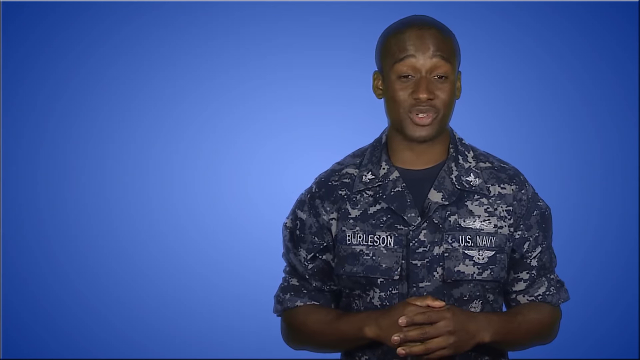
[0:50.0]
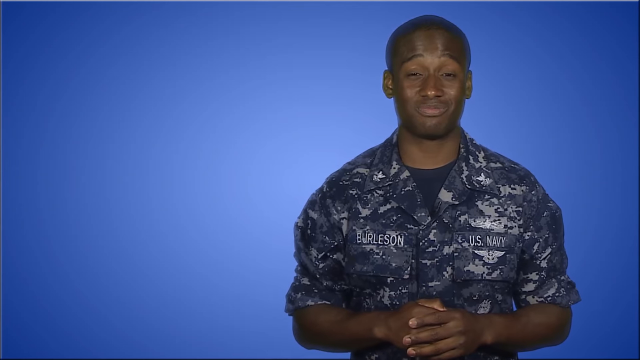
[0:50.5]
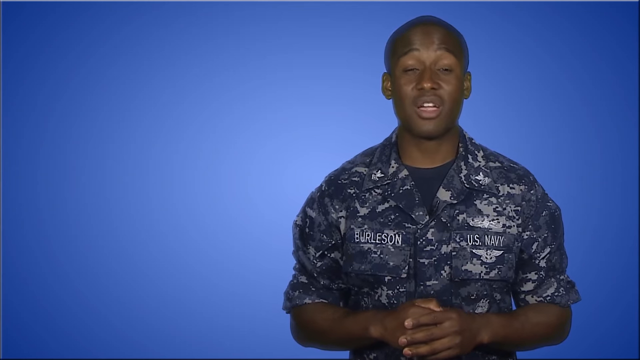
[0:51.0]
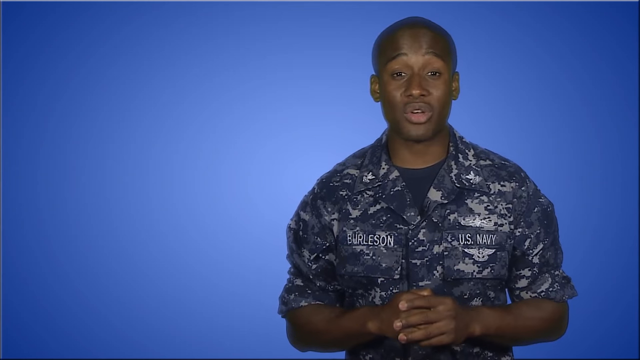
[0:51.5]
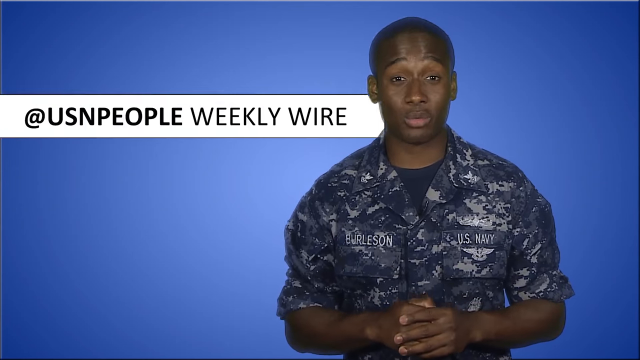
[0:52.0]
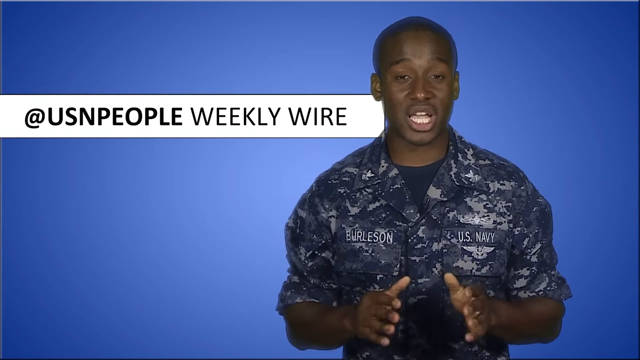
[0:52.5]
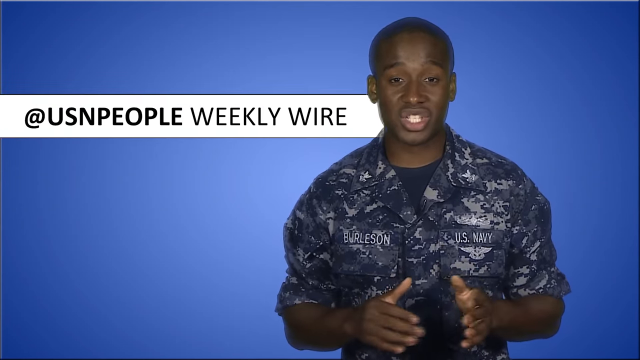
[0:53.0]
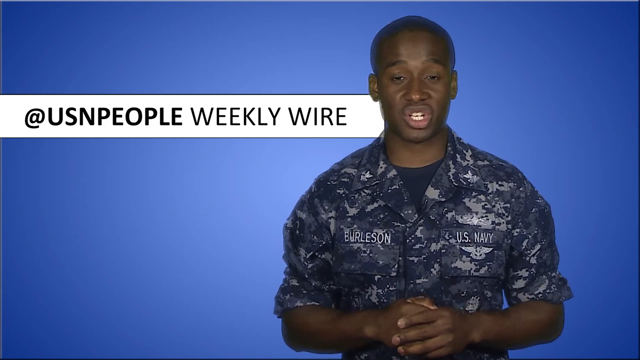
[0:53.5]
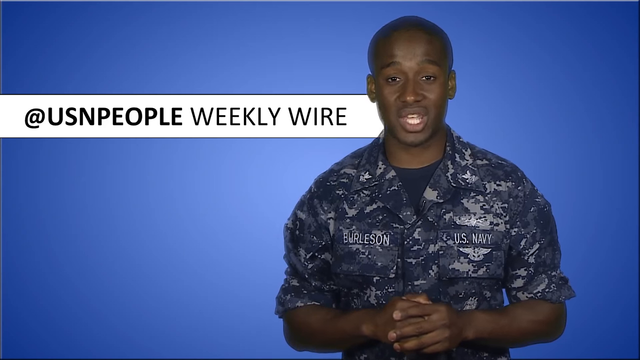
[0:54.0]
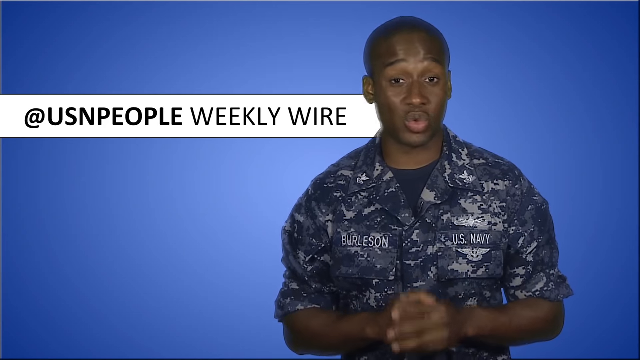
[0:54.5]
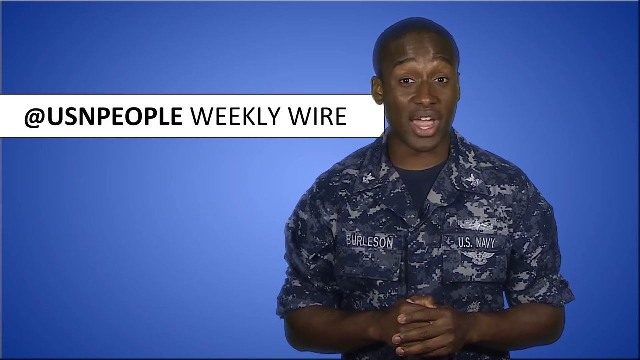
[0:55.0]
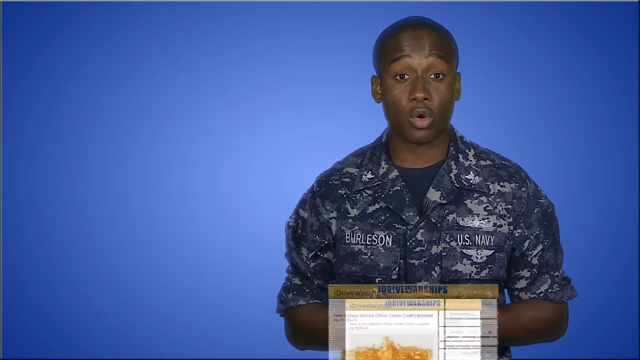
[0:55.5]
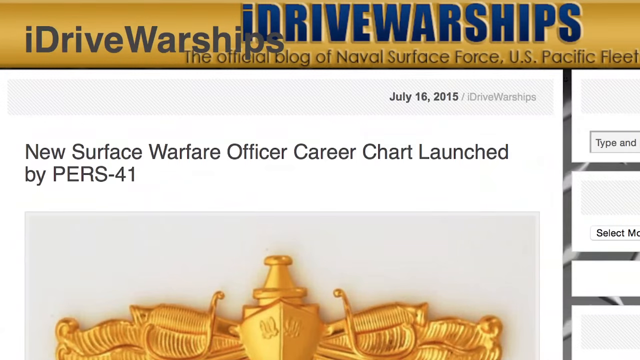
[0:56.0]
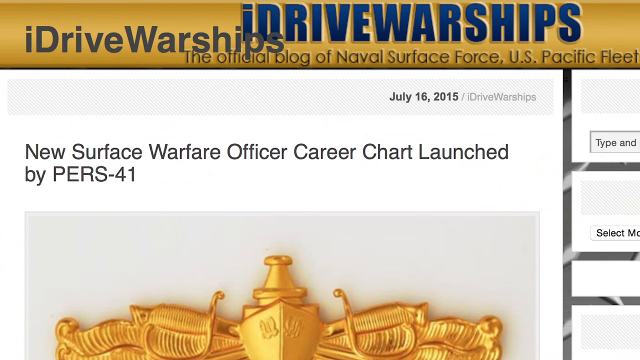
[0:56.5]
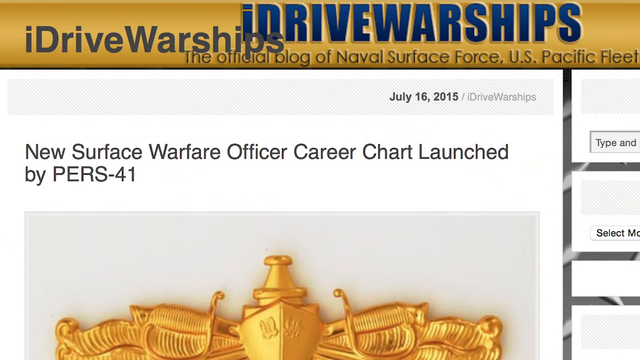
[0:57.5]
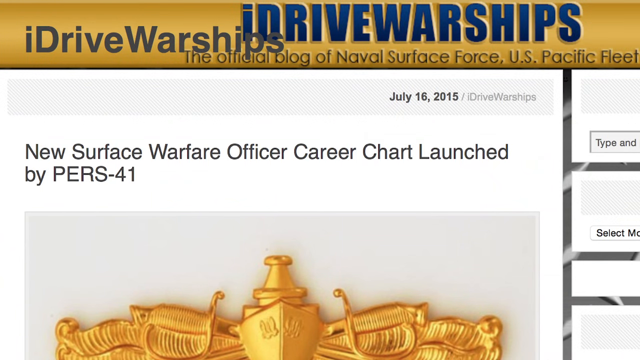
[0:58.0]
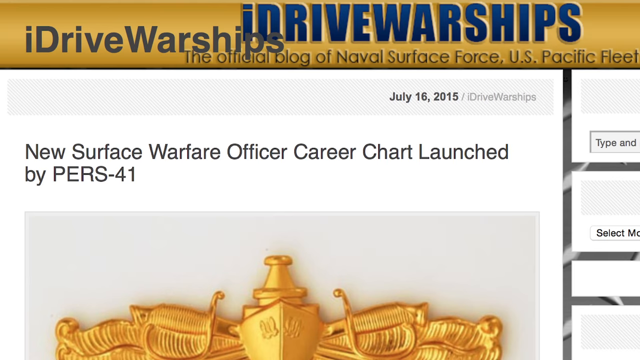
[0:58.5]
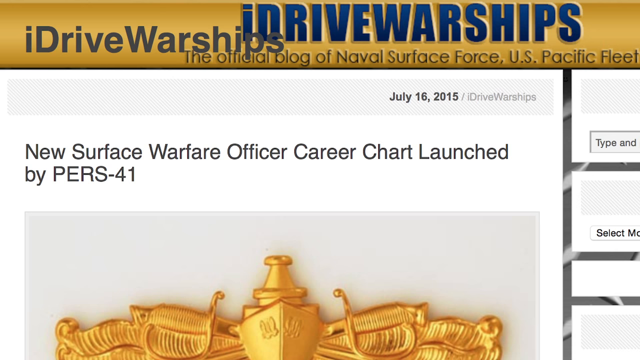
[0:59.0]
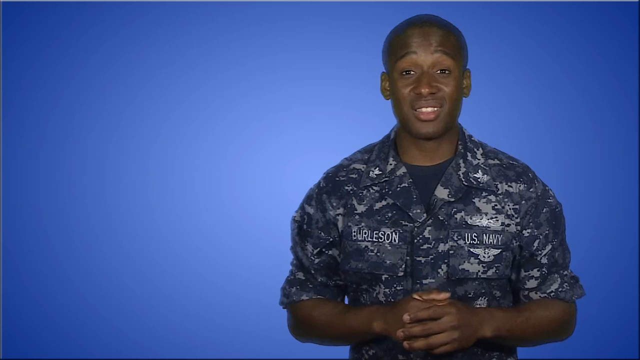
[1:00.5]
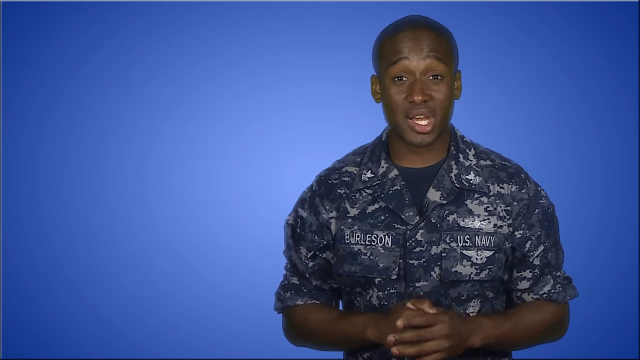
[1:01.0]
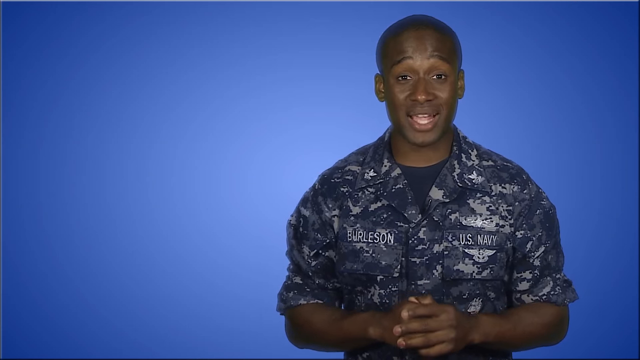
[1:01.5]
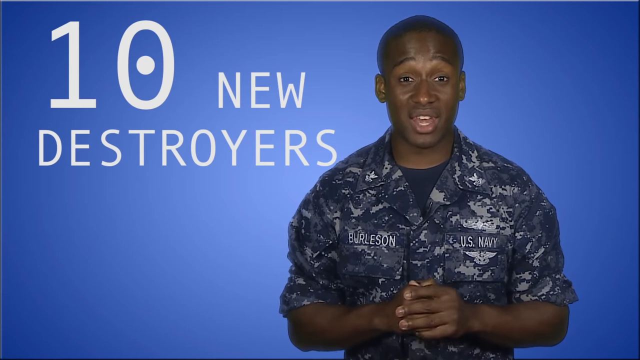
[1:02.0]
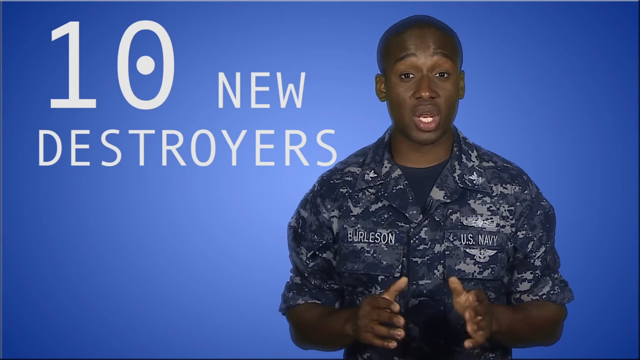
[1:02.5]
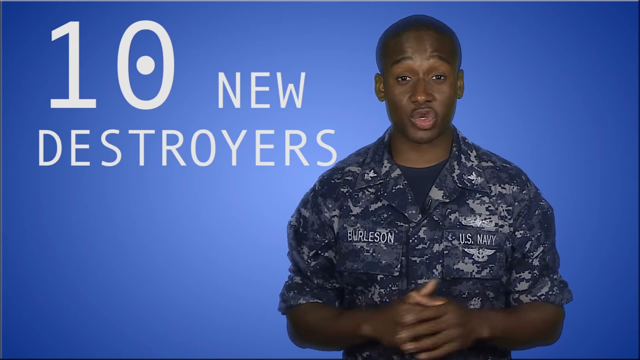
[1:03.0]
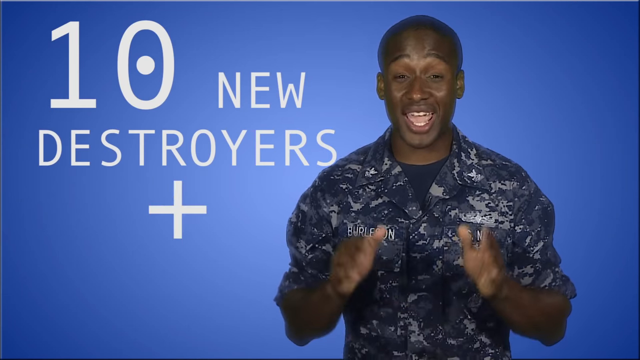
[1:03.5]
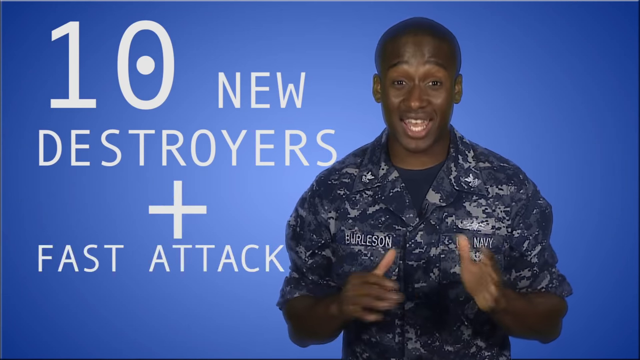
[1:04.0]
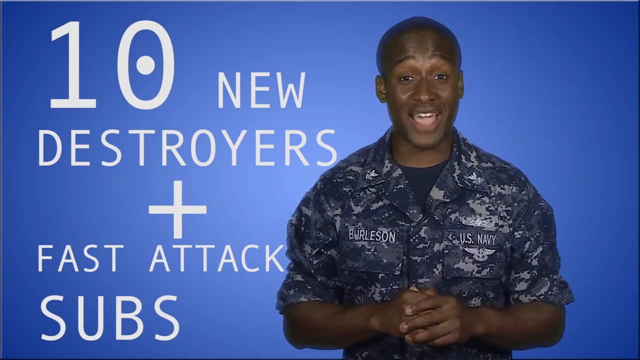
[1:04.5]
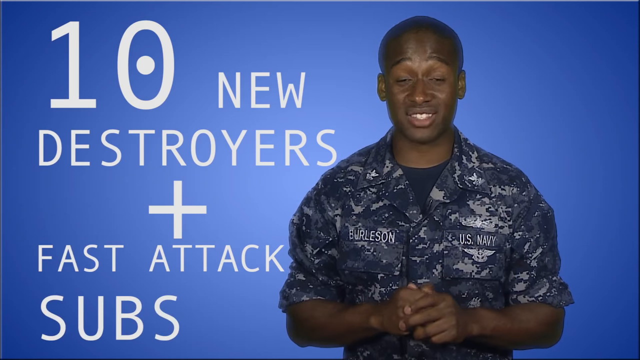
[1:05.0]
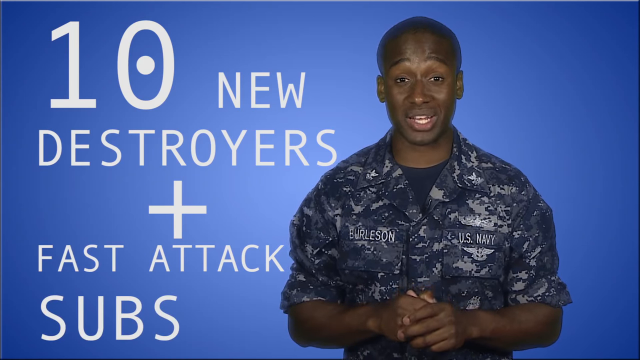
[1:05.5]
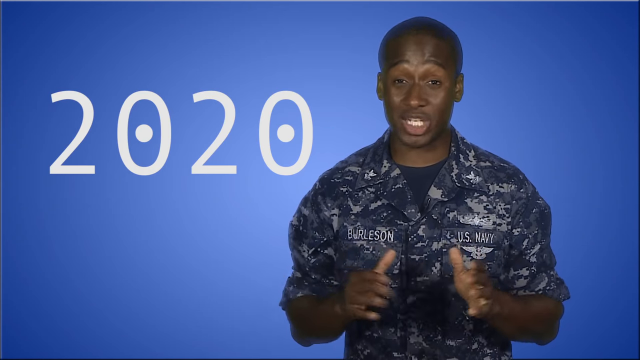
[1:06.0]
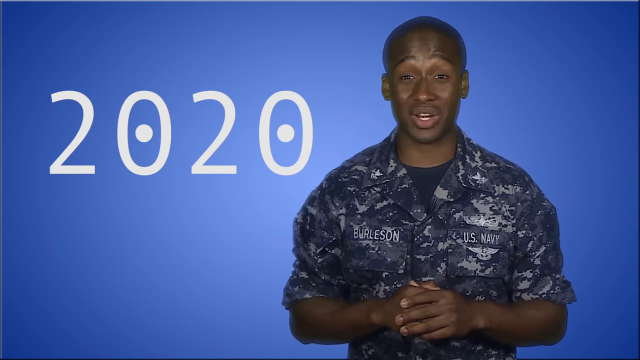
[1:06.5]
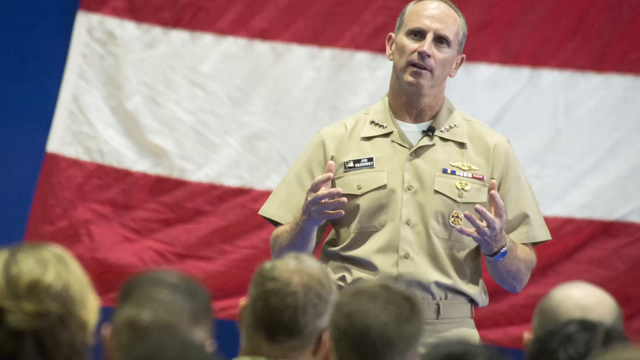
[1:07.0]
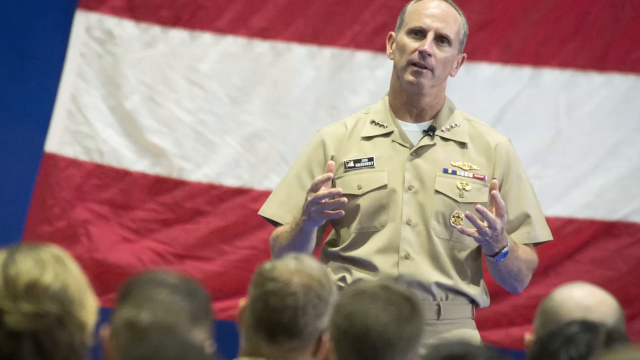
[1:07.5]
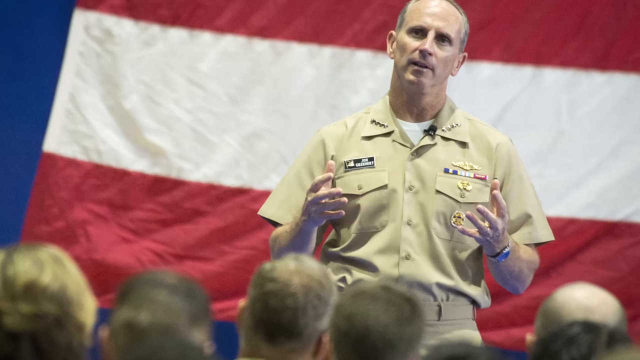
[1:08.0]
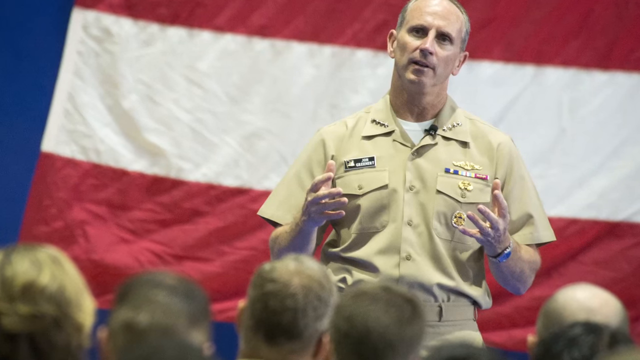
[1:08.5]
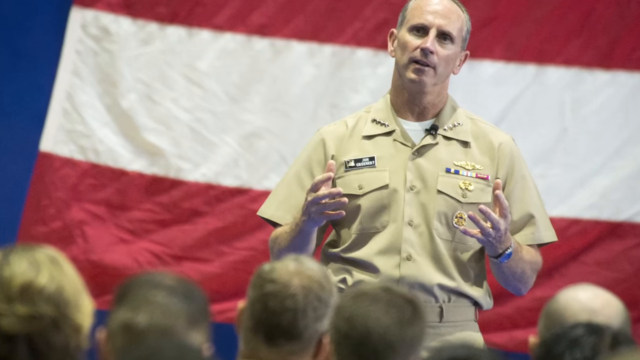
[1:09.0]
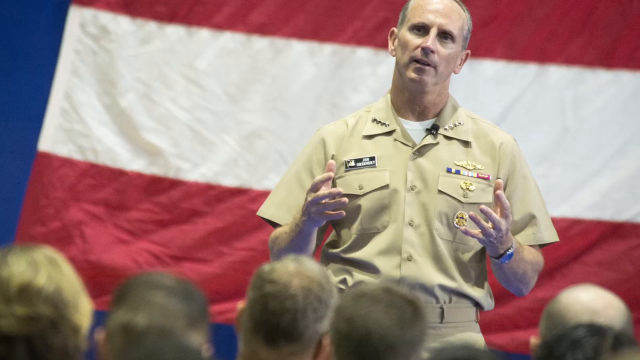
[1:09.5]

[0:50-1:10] Against a blue background, in the middle but somewhat to the right, a young Black male Navy officer in black, white and gray fatigues, with "Burleson" over his right chest and "U.S. Navy" over his left, speaks to the camera with his hands clasped in front of his stomach. A horizontal rectangular white box comes in from the left side of the screen, with black text inside reading "at U.S.N. People Weekly Wire." Then what looks to be a website browser pops up at the top, reading "I drive warships," with the tagline underneath in small letters: "the official blog of Naval Surface Force U.S. Pacific Fleet." A panel below shows a blog post dated July 16, 2015, titled "New Surface Warfare Officer Career Chart Launched by PERS-41." The video returns to Burleson standing in front of the blue screen, hands clasped in front of him as he speaks to the camera. On the left side of the screen, very large white letters read "10 new destroyers plus fast attack subs"; that text clears and "2020" appears. A still photograph follows of an older white man in a short-sleeved, tan military uniform with lots of pins on his chest, apparently on a stage with a large American flag behind him and the tops of audience members' heads visible.